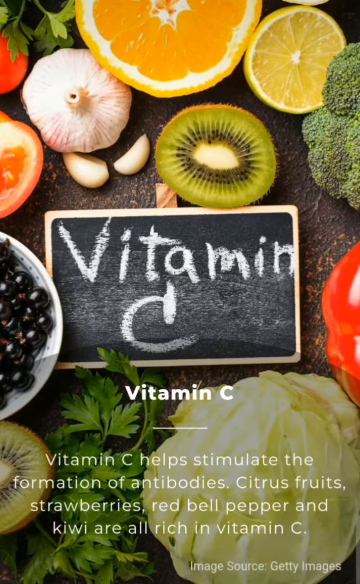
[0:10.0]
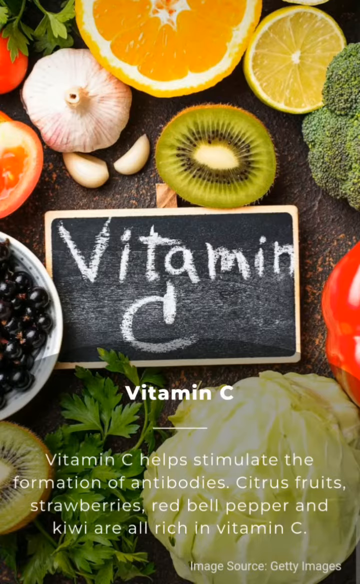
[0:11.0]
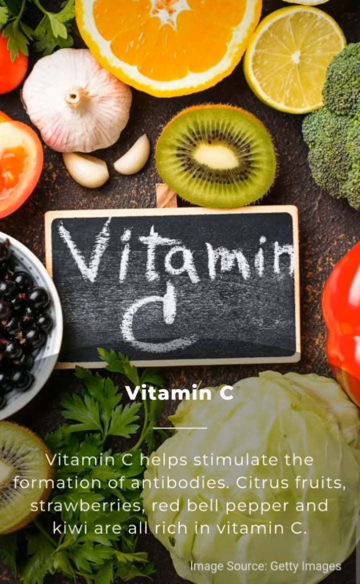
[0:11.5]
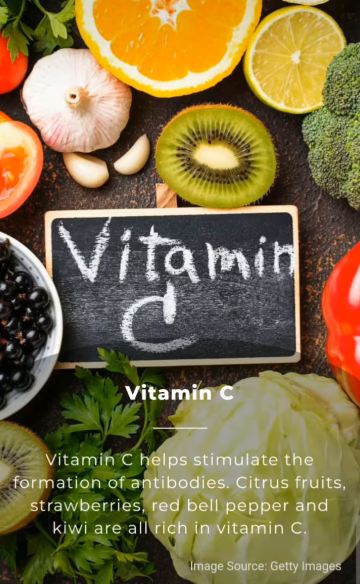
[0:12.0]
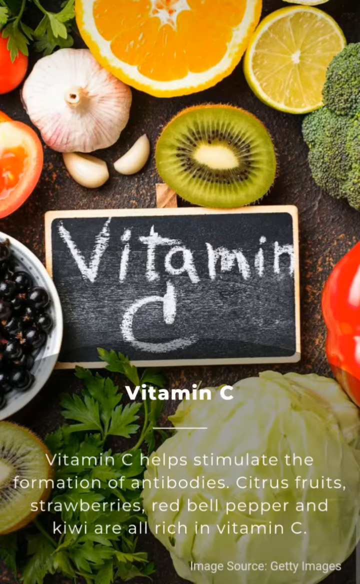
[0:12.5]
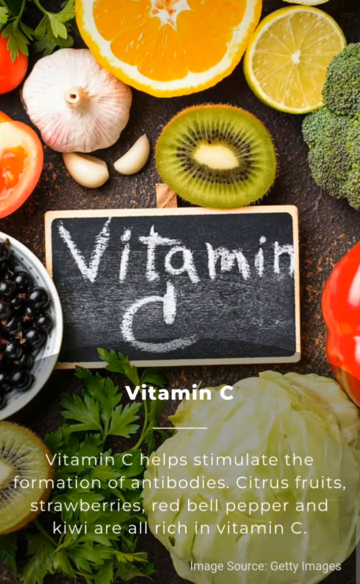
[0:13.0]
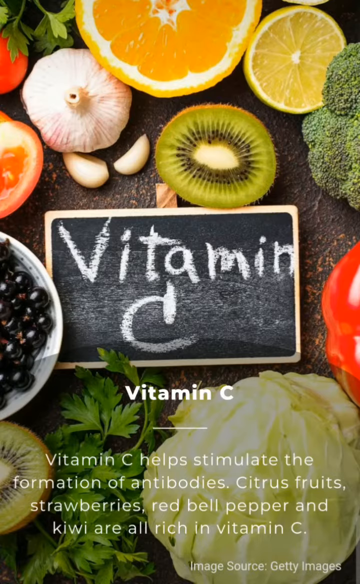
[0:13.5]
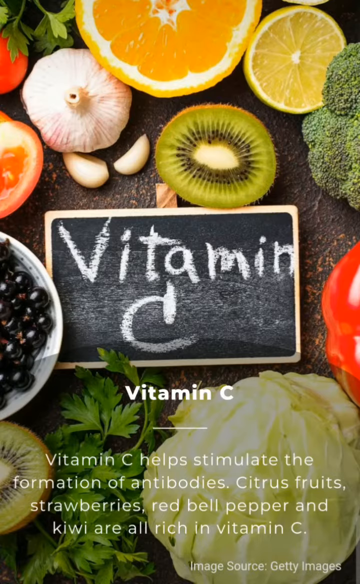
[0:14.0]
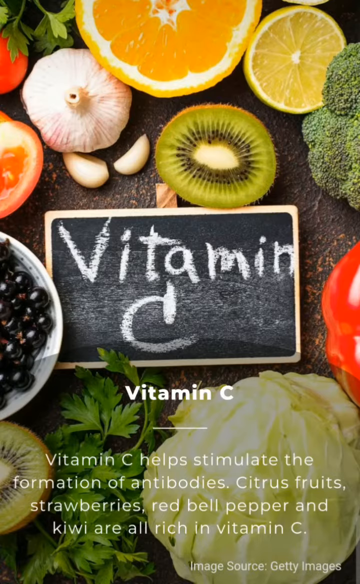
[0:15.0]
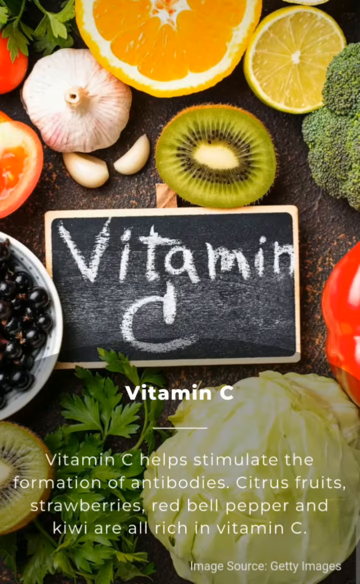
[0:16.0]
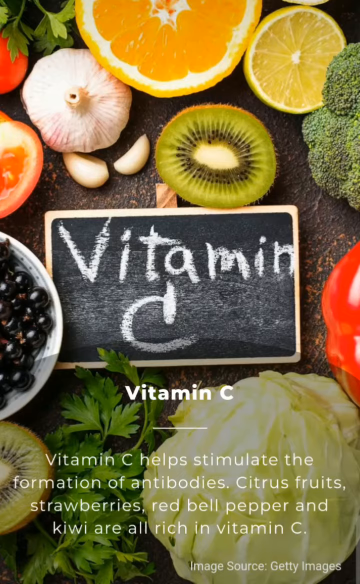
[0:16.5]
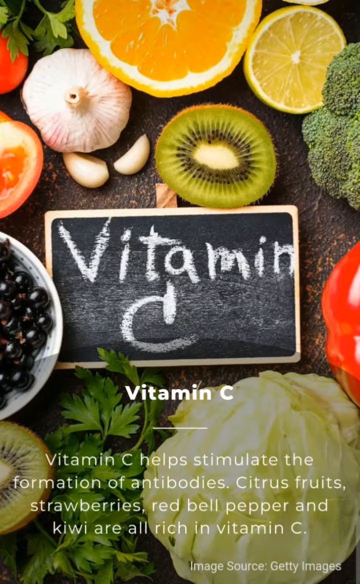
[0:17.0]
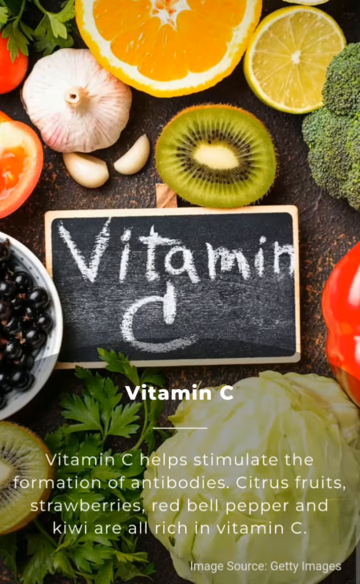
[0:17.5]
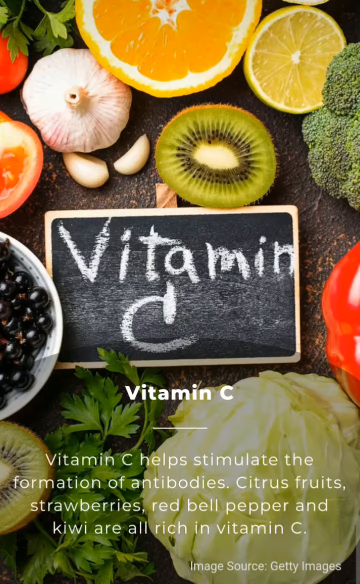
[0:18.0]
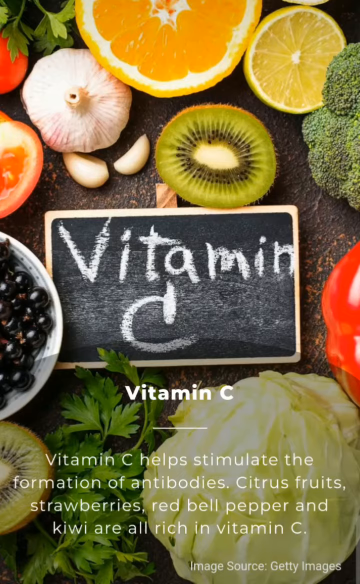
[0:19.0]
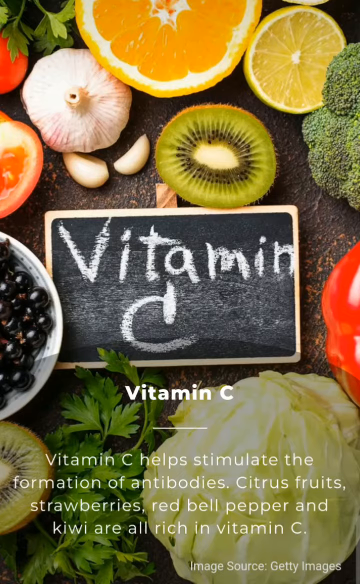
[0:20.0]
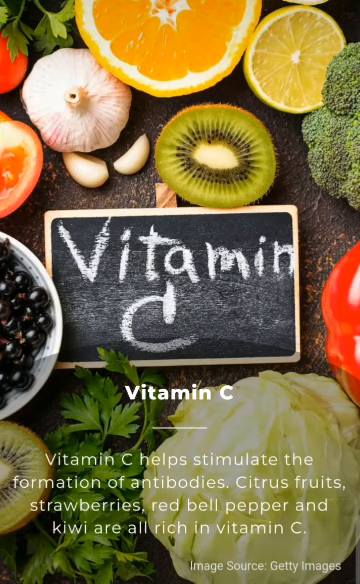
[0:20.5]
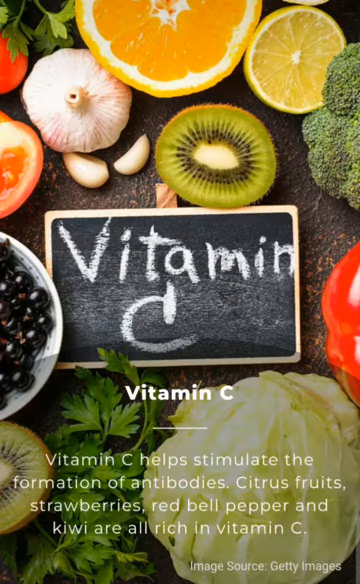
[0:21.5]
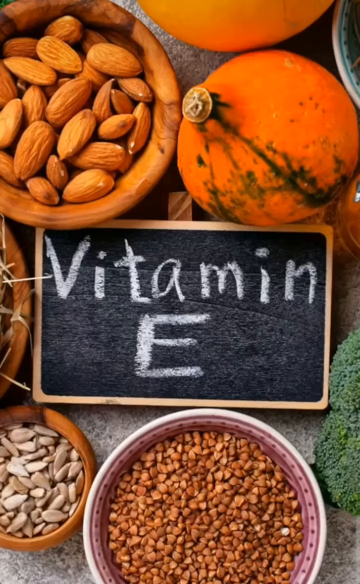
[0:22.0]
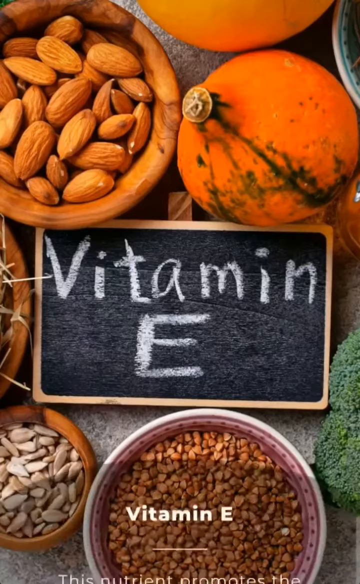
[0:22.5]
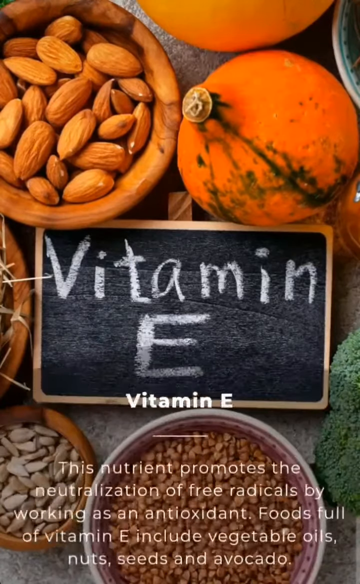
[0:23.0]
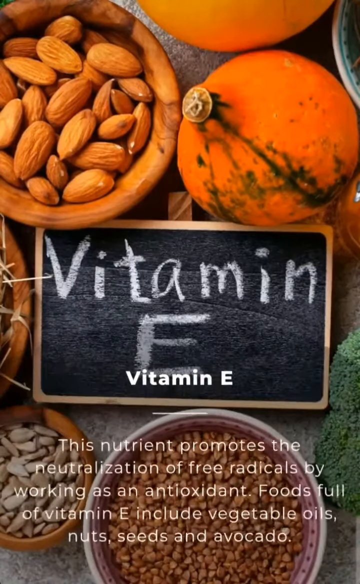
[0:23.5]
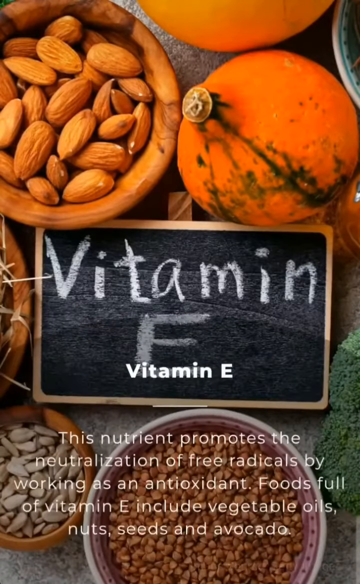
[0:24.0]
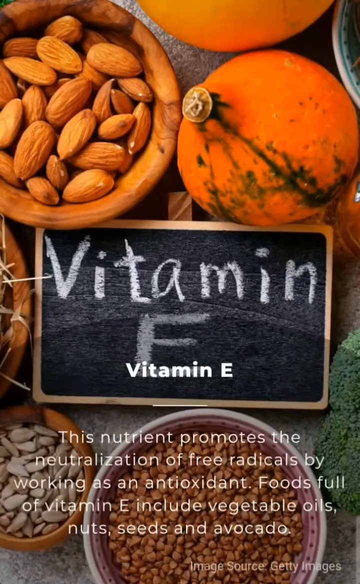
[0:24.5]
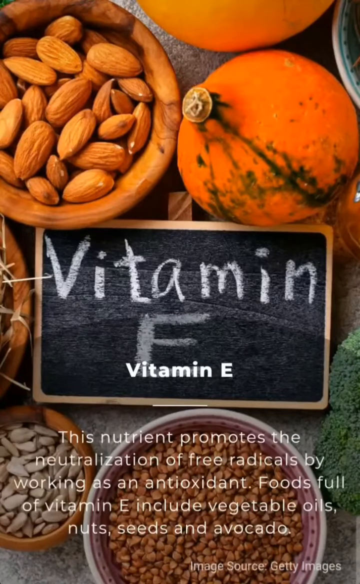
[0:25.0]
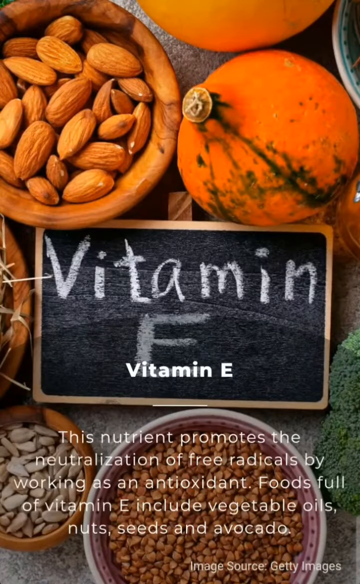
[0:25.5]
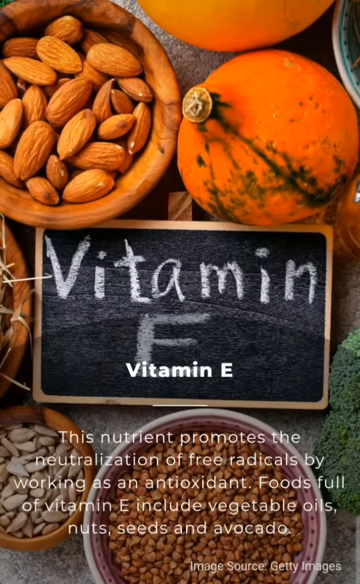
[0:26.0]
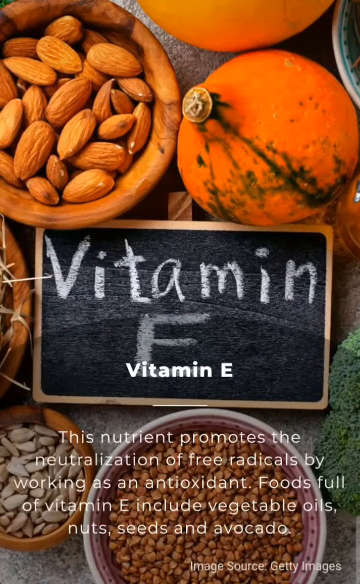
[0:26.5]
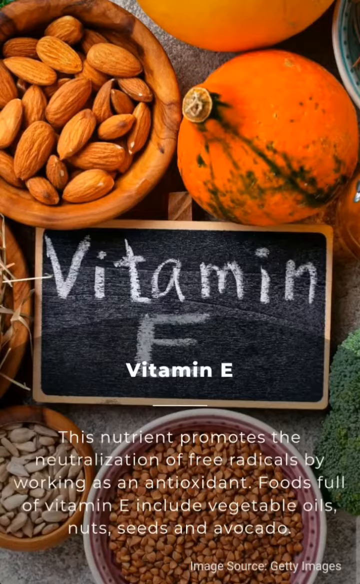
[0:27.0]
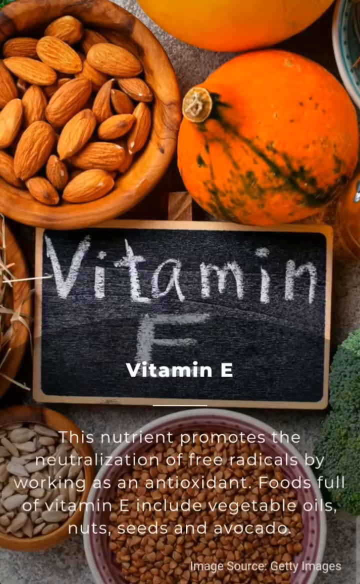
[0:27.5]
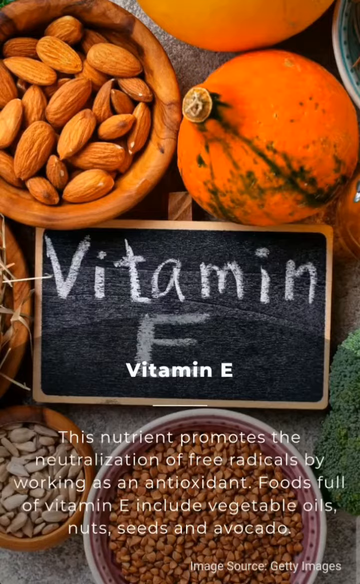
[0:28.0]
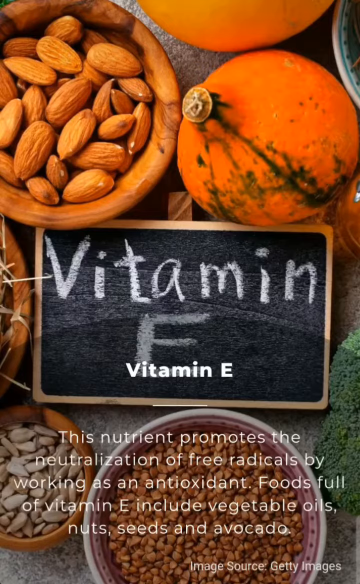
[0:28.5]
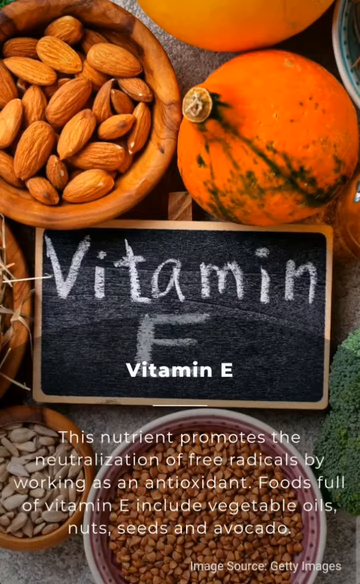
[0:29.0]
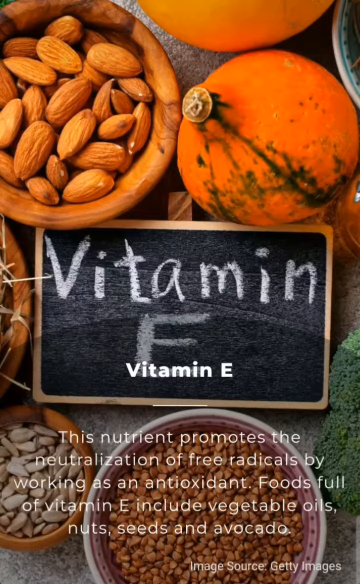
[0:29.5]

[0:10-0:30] The vitamin C slide continues, showing the same image and information. A blackboard has "vitamin C" written in chalk in its centre, with a number of foods laid around it, apparently ones that are good for vitamin C: garlic, oranges, lemons, kiwi fruit, some kind of berries, what seems to be parsley, lettuce, and broccoli. There also seem to be some peppers, but they are cut off and cannot be seen properly. The next slide is about vitamin E, again written in chalk on a blackboard. It says "Nutrient promotes the neutralisation of free radicals by working as an antioxidant," and lists foods that "include vegetable oils, nuts, seeds and avocado." The board is surrounded by a variety of unidentified nuts and seeds, apparently ones high in vitamin E.